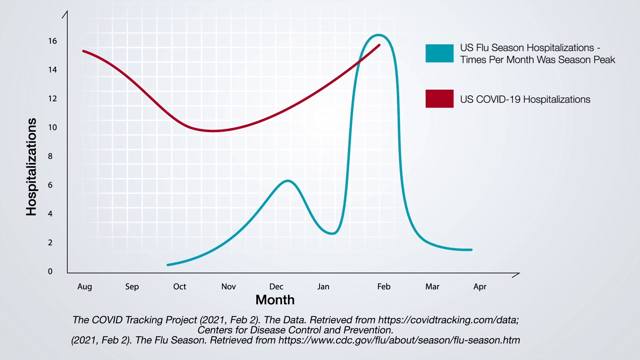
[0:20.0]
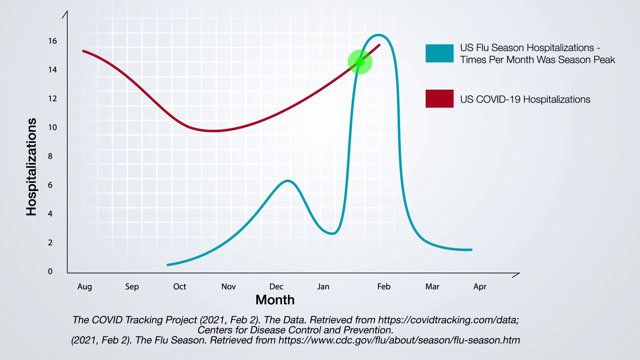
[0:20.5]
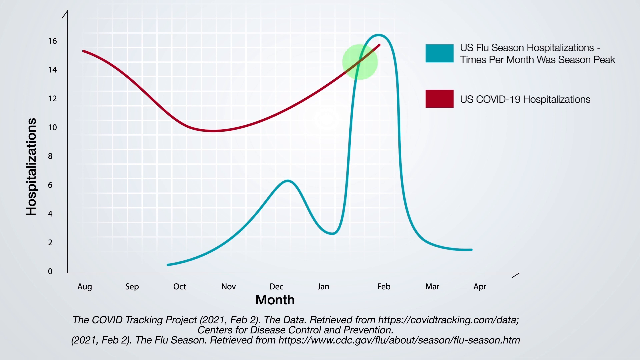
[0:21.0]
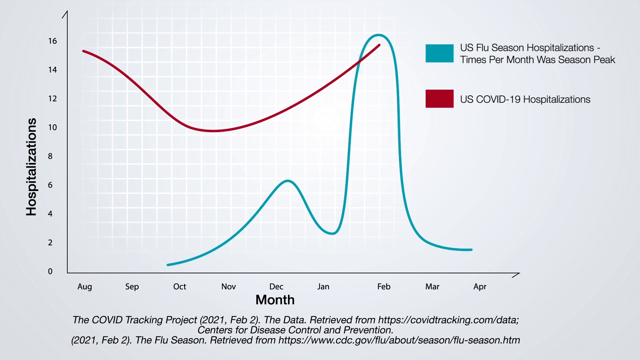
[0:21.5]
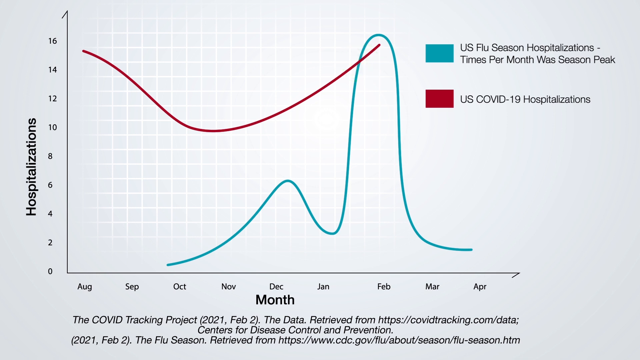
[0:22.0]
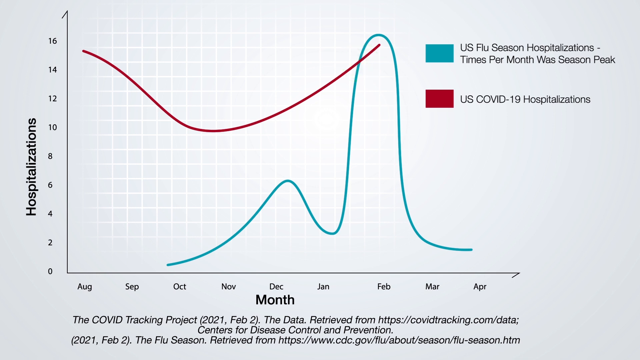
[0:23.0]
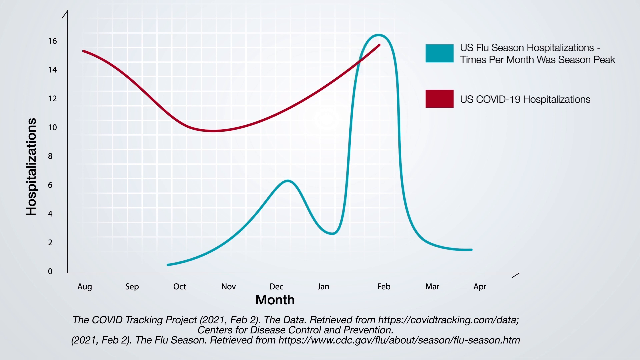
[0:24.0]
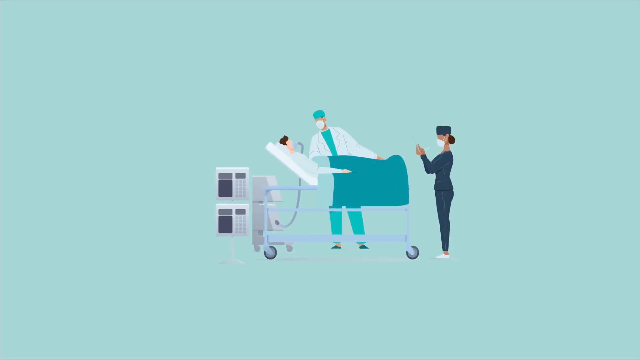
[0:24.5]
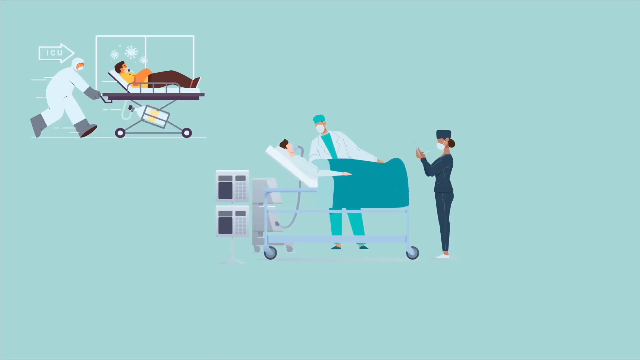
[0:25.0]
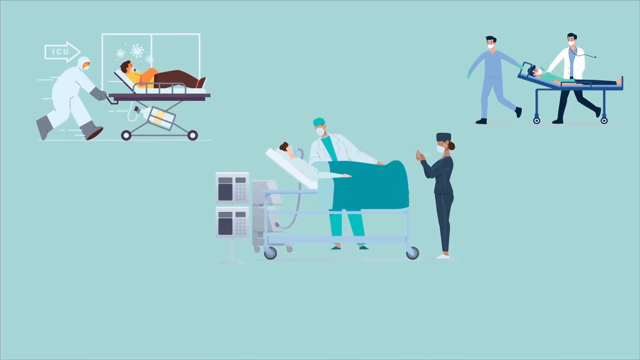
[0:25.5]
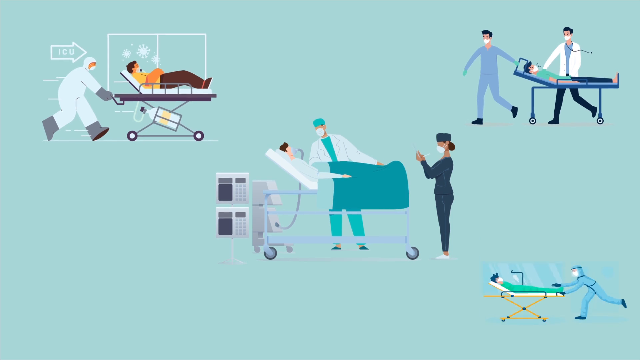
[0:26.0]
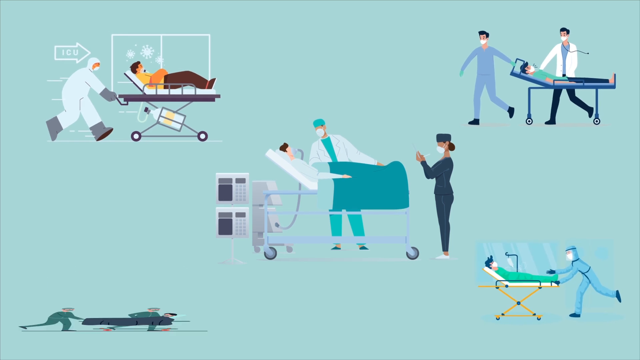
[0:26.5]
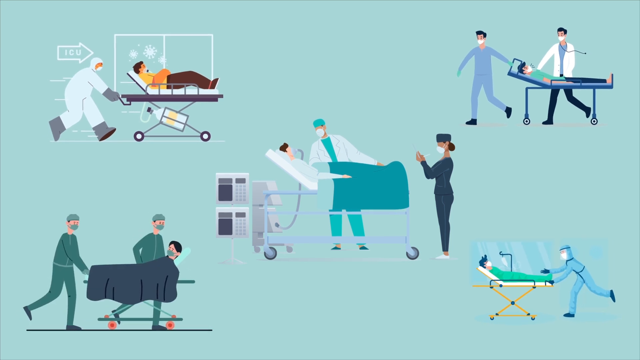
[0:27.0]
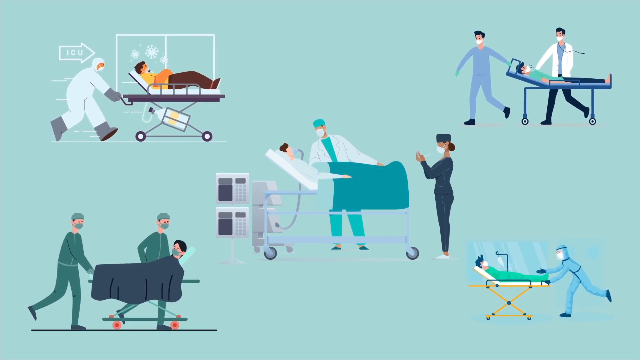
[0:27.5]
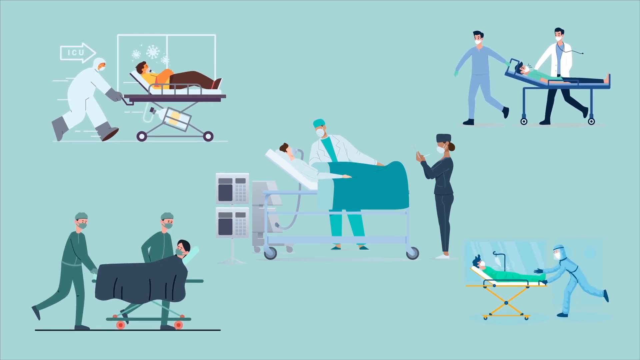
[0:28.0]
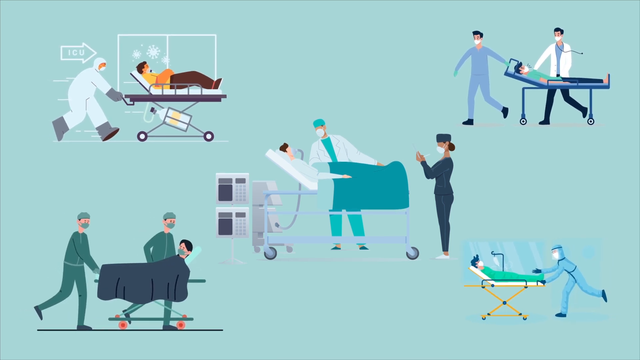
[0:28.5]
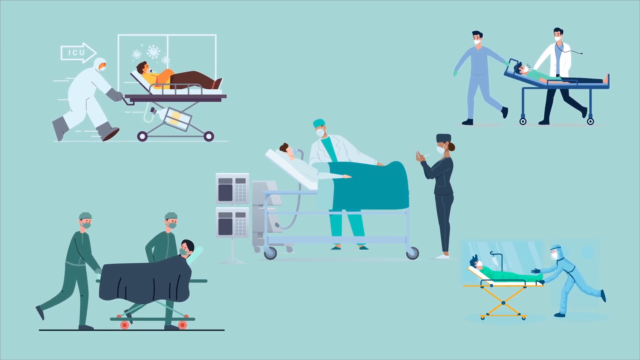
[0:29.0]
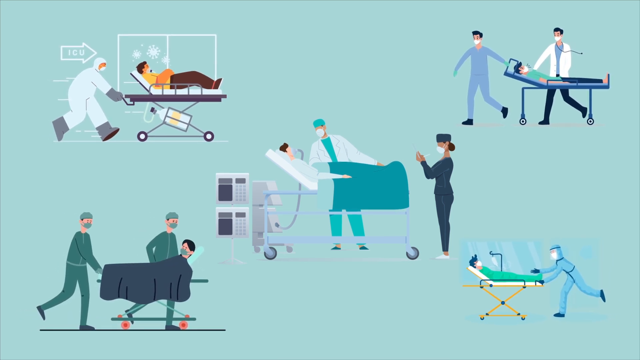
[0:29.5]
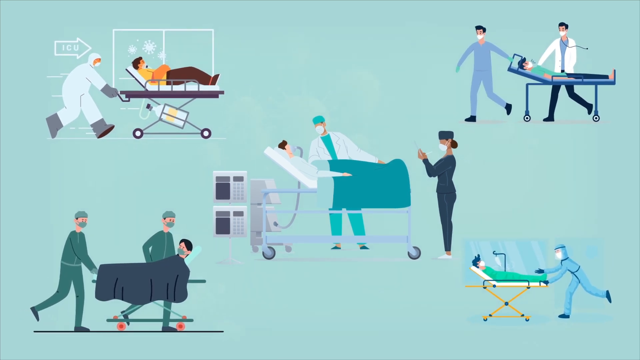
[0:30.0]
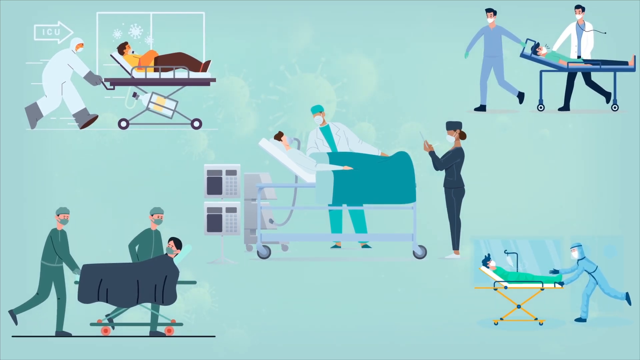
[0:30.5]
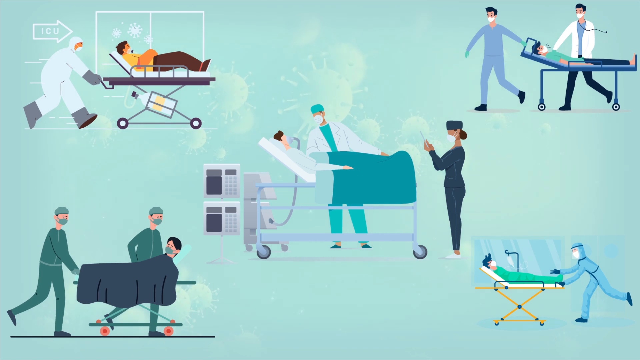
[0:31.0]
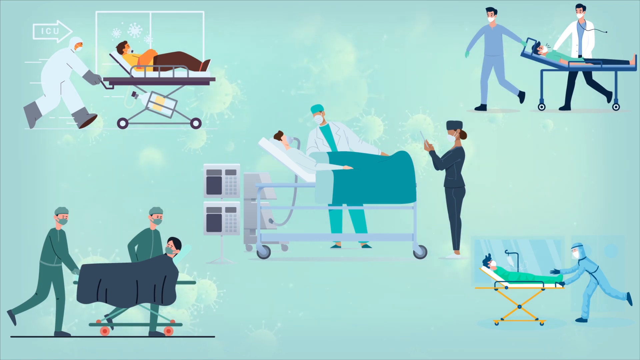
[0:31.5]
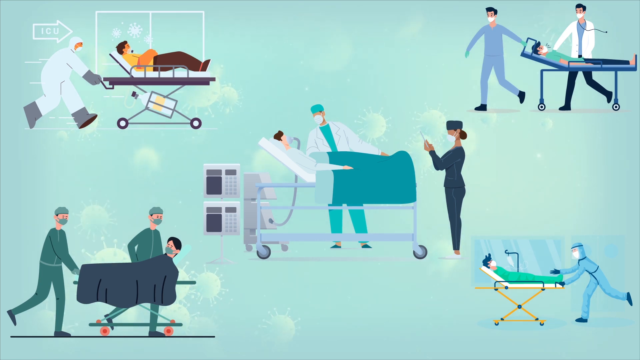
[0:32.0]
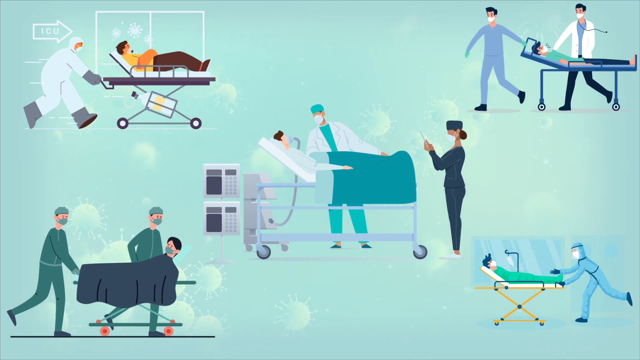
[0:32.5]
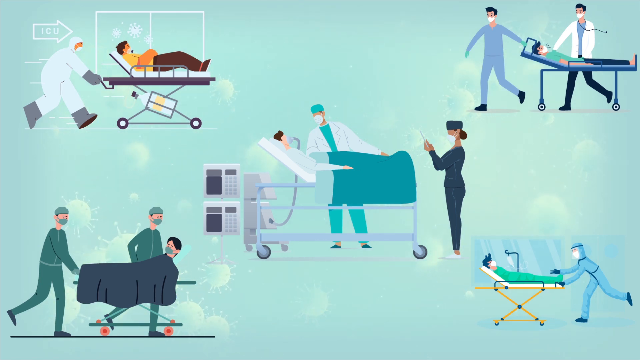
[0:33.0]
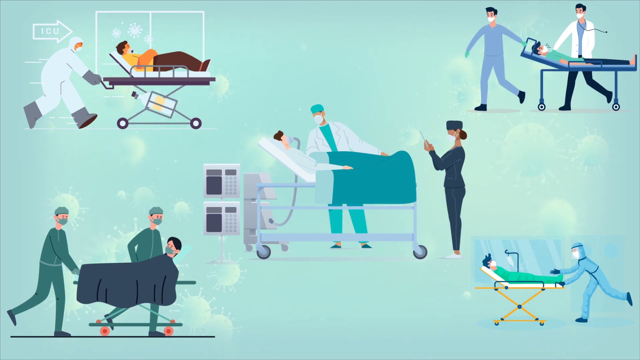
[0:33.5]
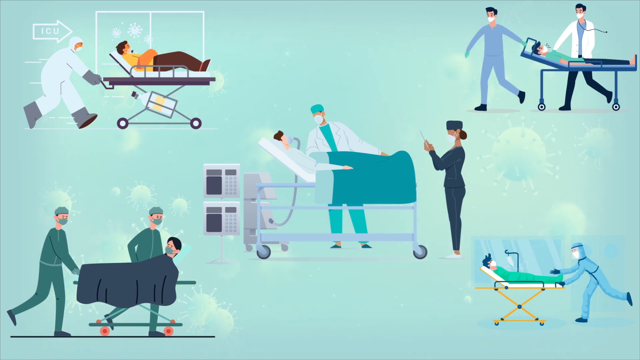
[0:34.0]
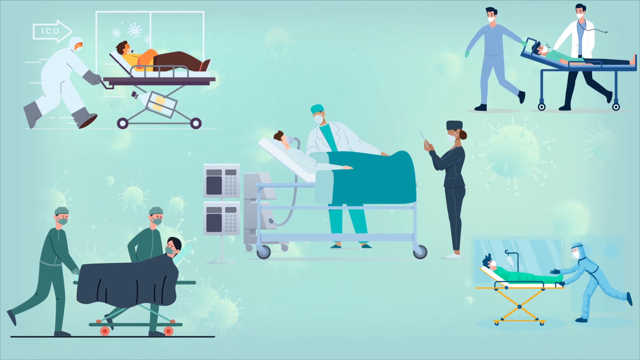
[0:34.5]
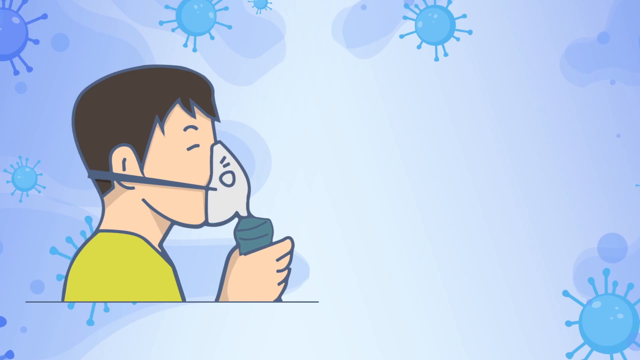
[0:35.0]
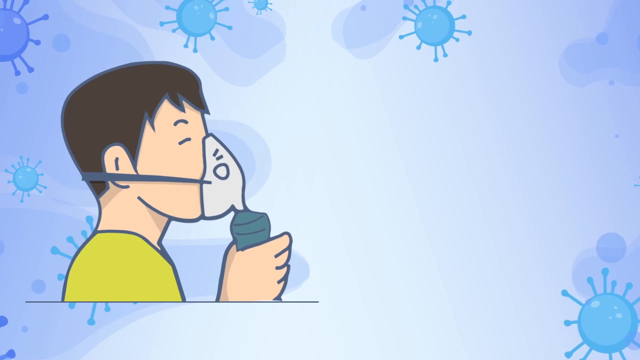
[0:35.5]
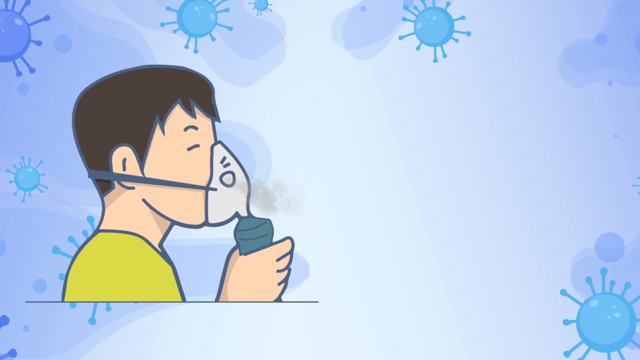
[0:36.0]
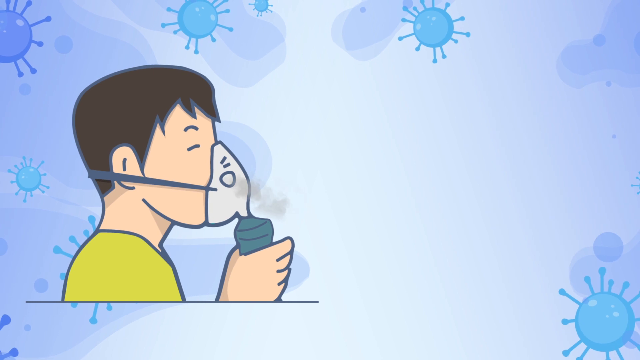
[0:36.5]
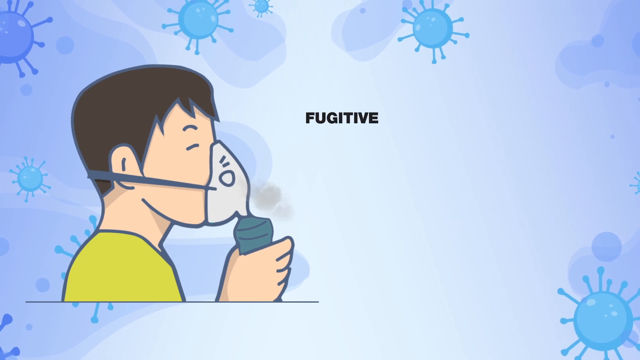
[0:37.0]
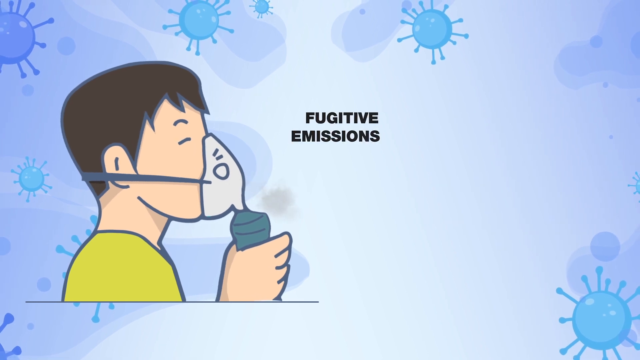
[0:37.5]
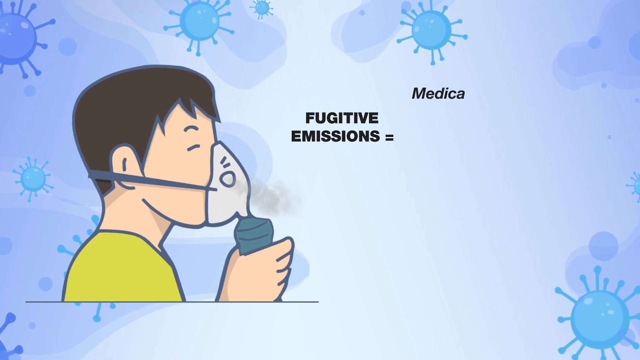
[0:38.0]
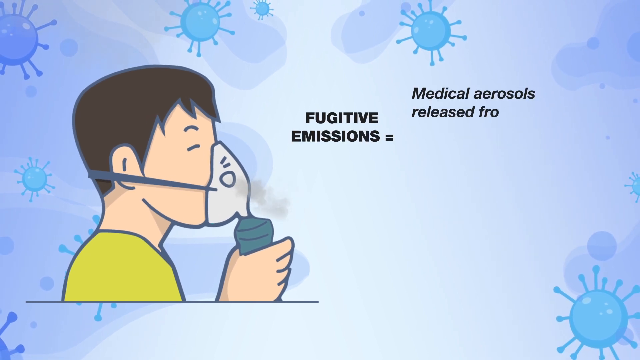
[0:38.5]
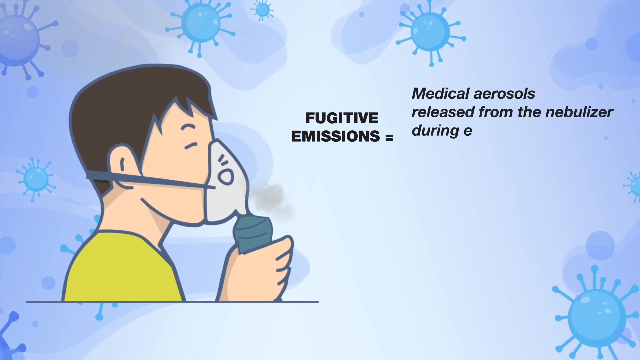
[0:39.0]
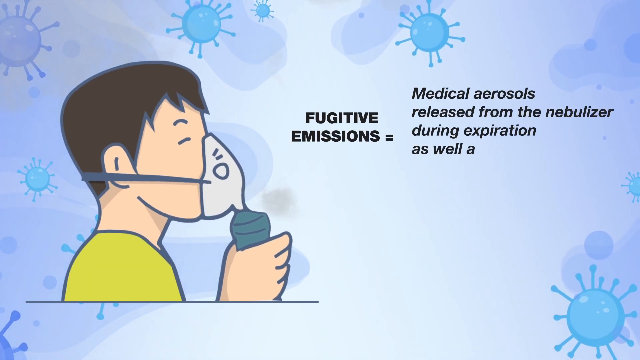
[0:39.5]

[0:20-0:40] The line graph showing hospitalizations for COVID-19 and the flu is on screen. Then drawn pictures appear of hospital workers with patients in beds and on gurneys. One looks like an ICU bed with a doctor and a nurse at the bedside. Two more pictures come up on the bottom in which people are being pushed on gurneys, while the person in the ICU is in the center. The video then cuts to a man with brown hair and a mask, with the text "Fugitive emissions equals medical aerosols released from the nebulizer during expiration as well as those not inhaled". In the background there are animated virus balls all over the place.